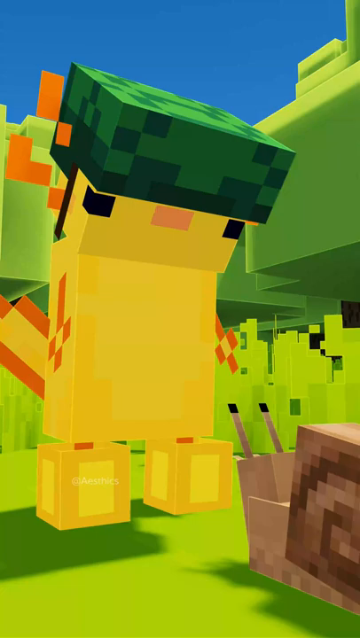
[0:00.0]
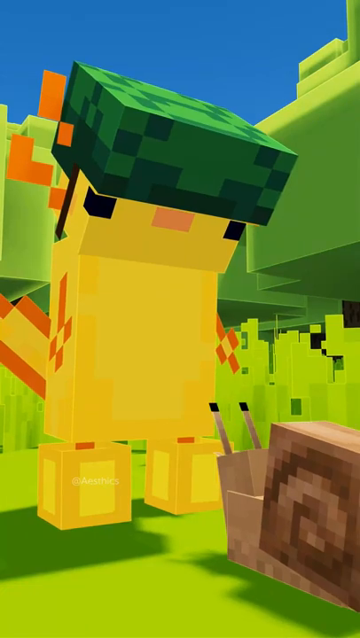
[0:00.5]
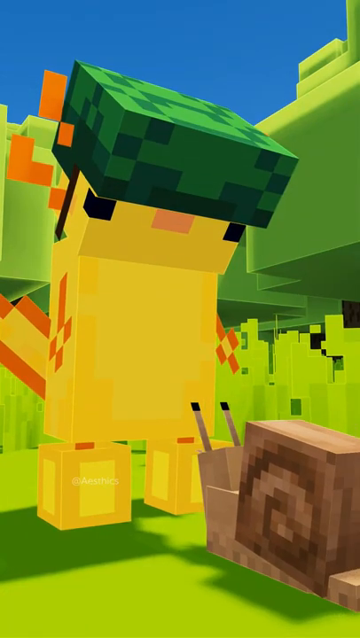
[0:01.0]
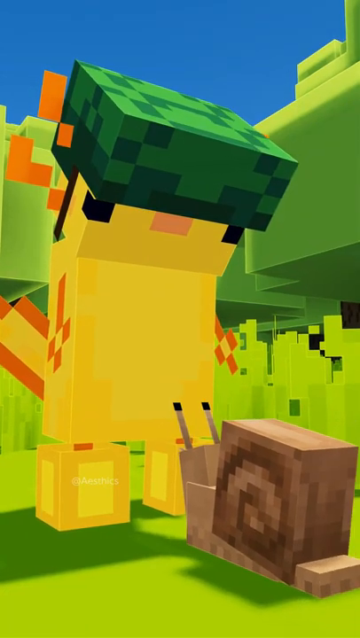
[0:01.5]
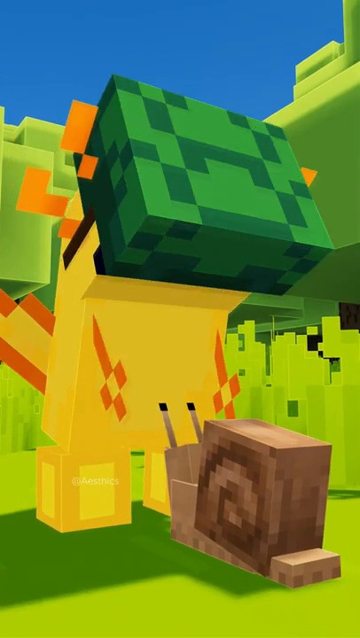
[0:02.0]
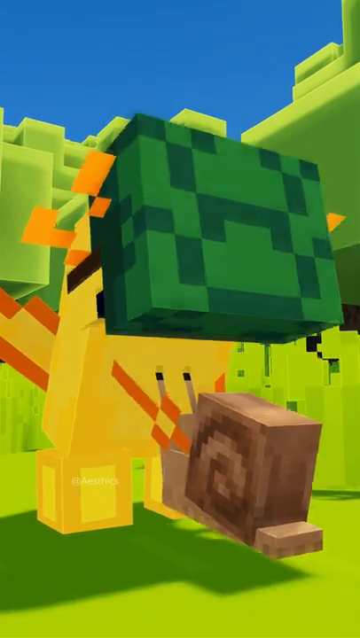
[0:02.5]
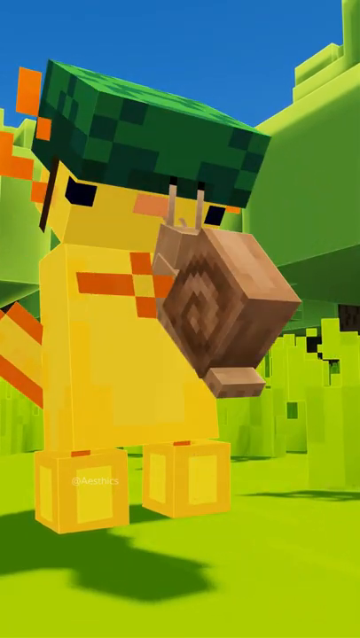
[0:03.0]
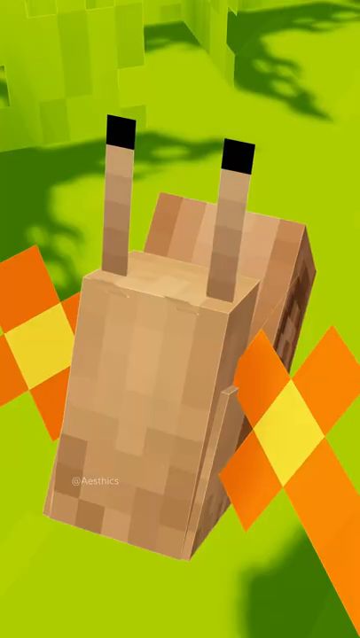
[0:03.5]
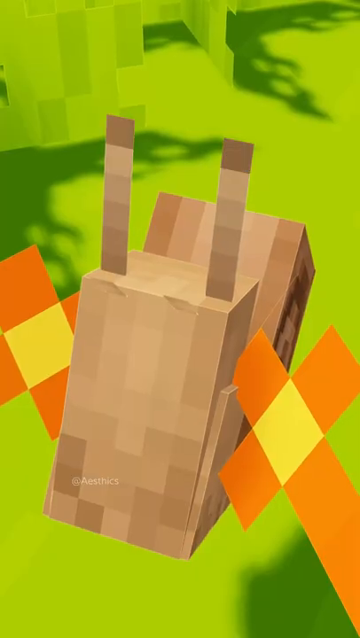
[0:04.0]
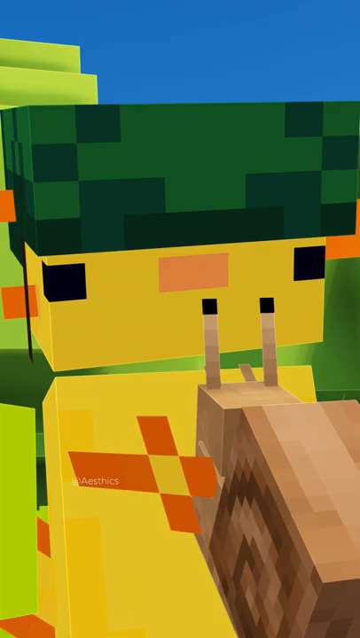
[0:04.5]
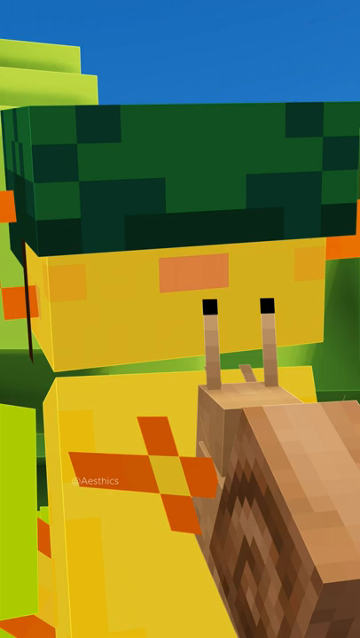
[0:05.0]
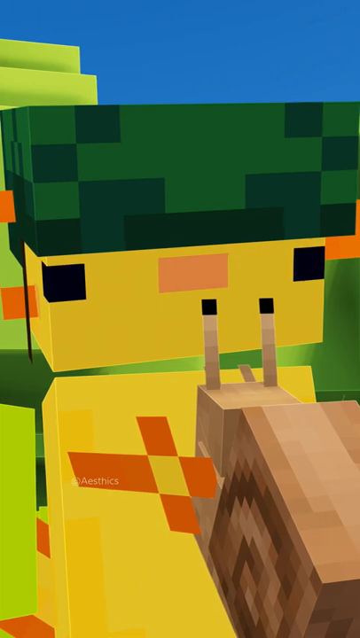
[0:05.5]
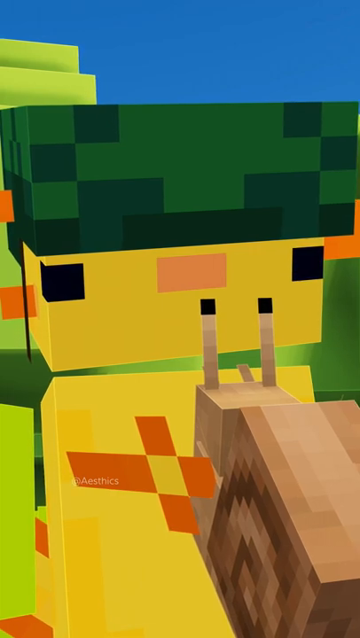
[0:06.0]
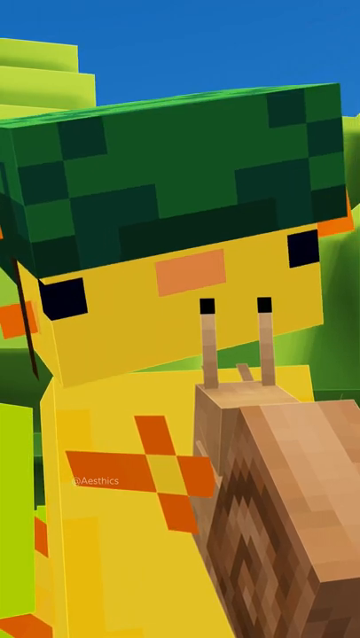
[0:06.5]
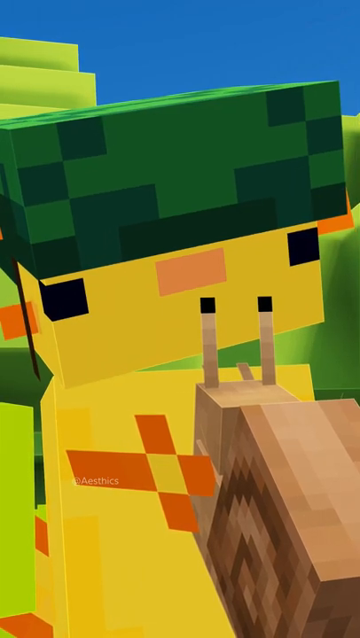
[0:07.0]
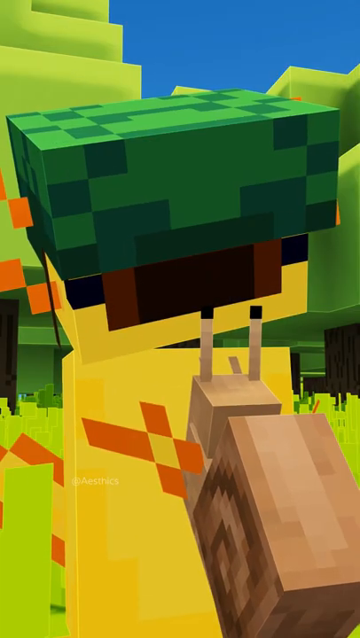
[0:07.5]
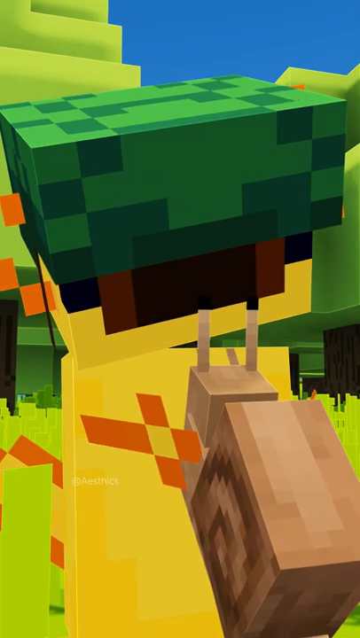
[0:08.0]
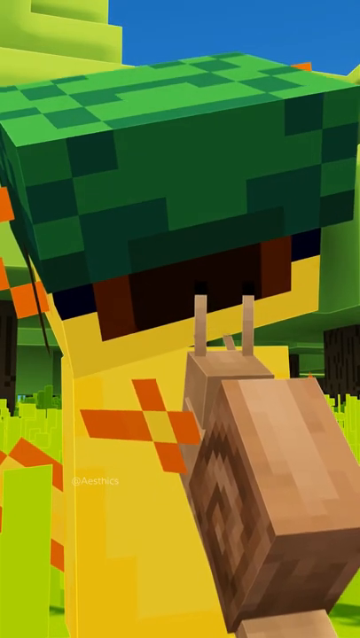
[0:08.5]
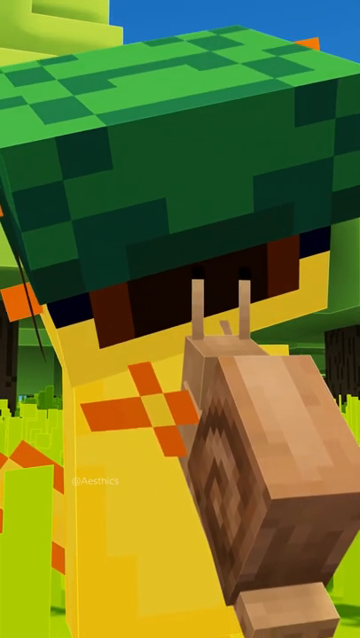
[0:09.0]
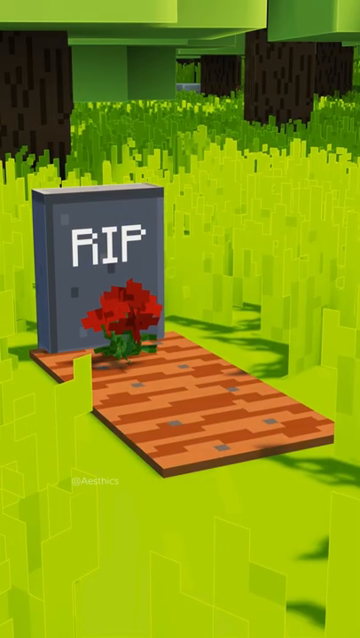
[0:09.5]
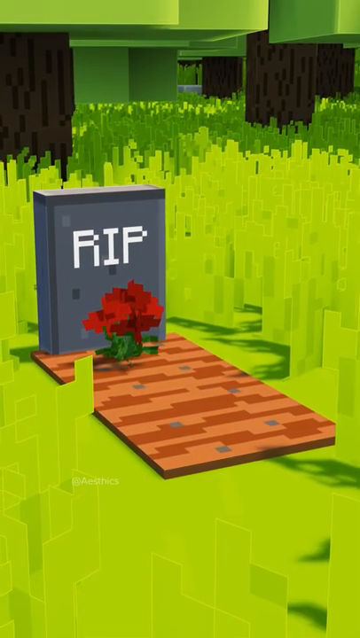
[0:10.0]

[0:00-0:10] A video game labeled "AXOLOTL vs Tick Tock Snell" appears in a short. A square yellow character that looks like Legos is shown, and a square brown snell walks up to him; he picks up the snell. The yellow character wears a square green hat. The scene then cuts to a brown grave with a gray headstone at its front, and the headstone reads "R.I.P." On the grave, where he puts the square brown snell, is a bouquet of red flowers. Square green trees are in the background. The other elements of the game are all square-shaped and also look like Legos, so the scene looks like a Lego set.